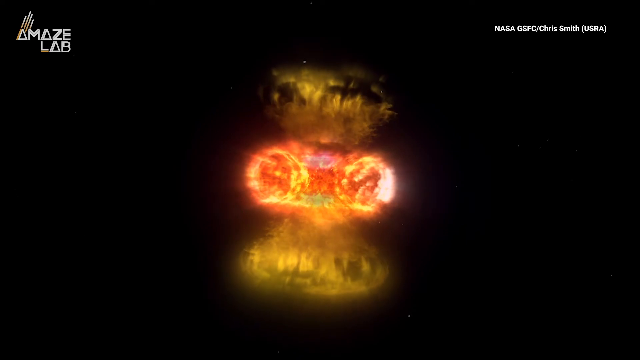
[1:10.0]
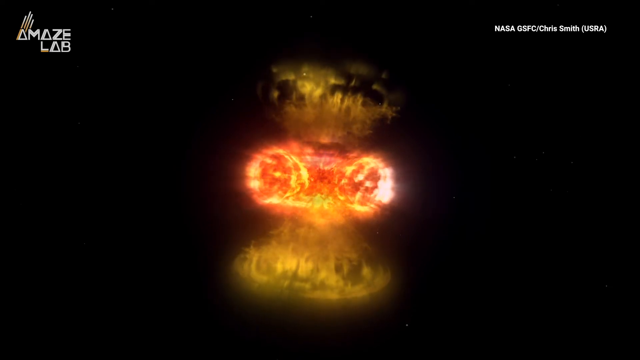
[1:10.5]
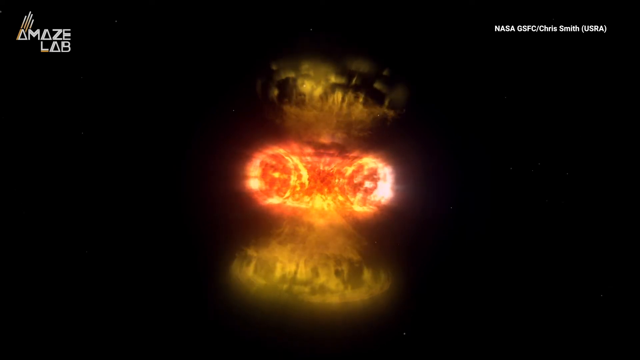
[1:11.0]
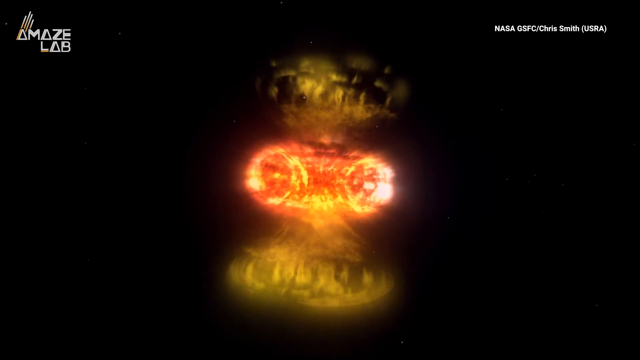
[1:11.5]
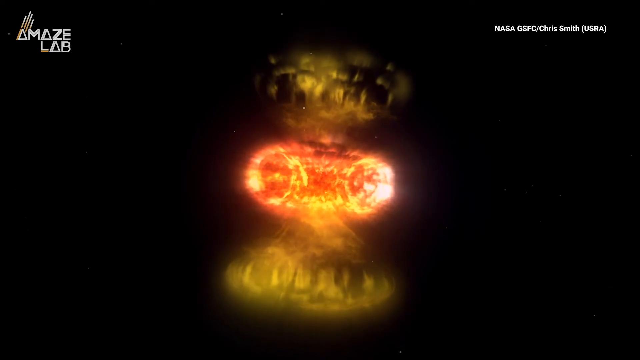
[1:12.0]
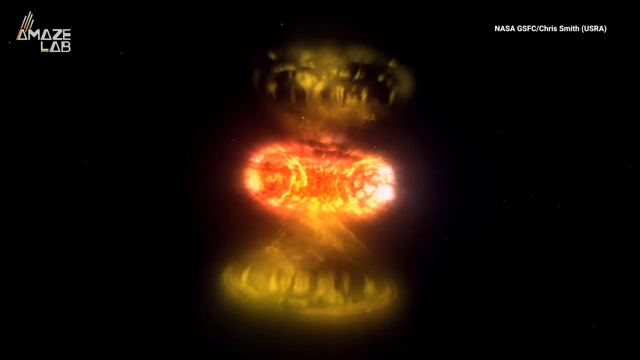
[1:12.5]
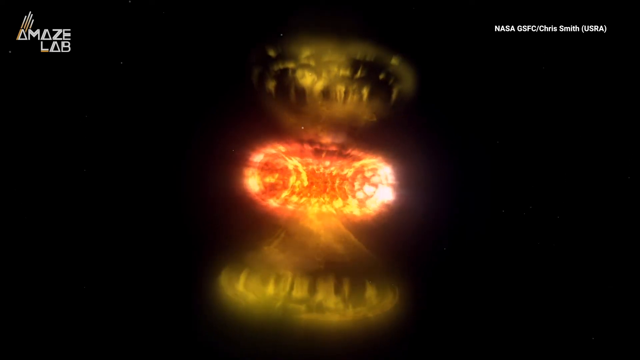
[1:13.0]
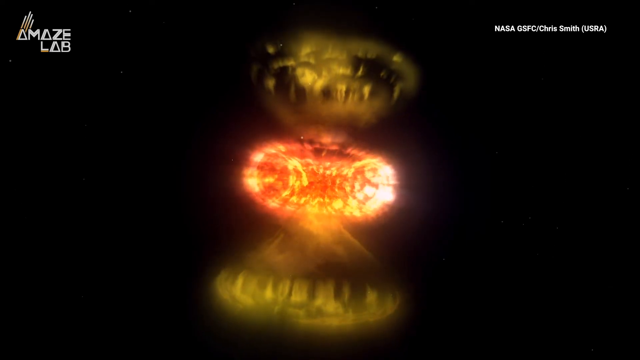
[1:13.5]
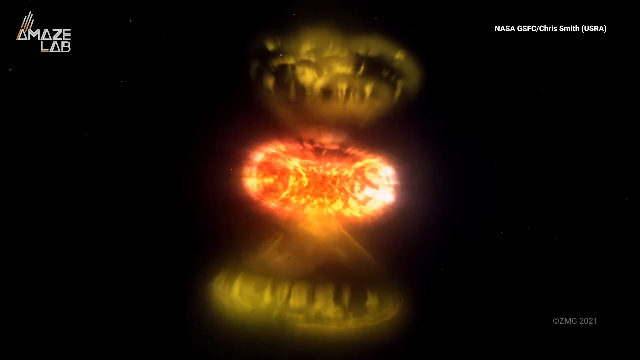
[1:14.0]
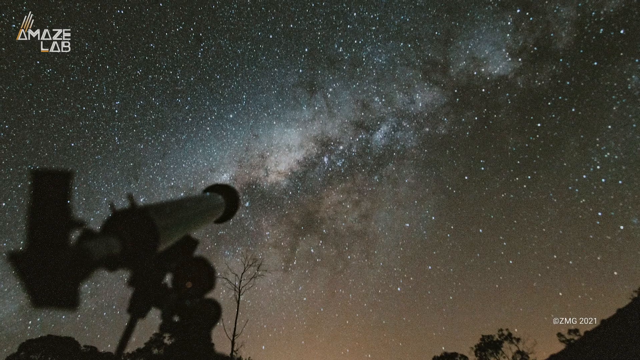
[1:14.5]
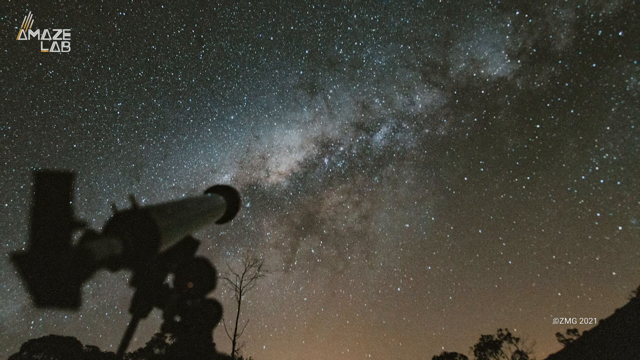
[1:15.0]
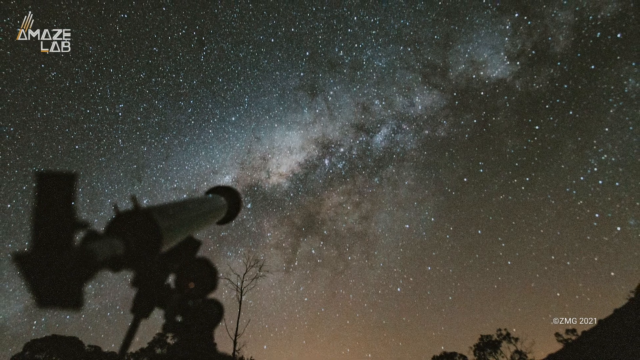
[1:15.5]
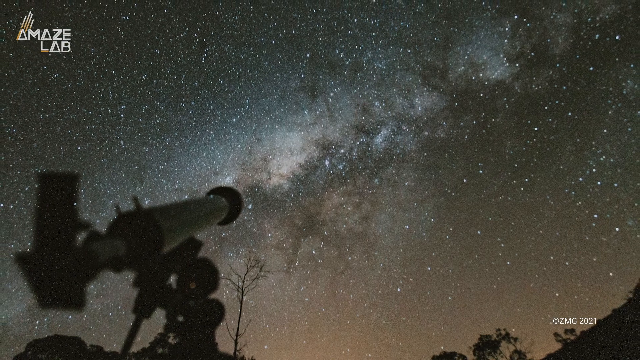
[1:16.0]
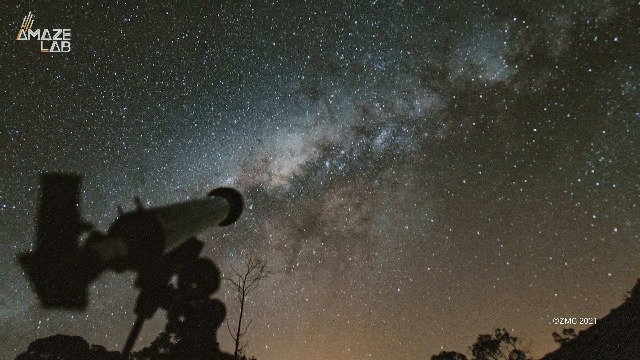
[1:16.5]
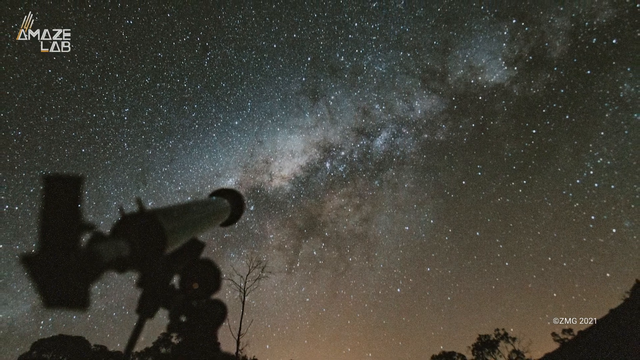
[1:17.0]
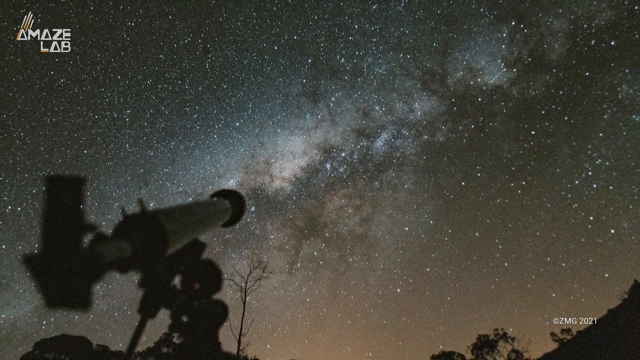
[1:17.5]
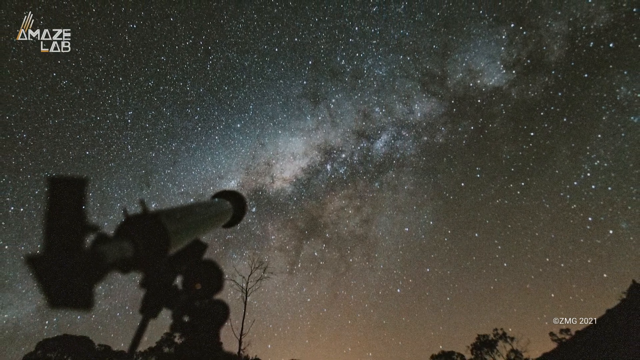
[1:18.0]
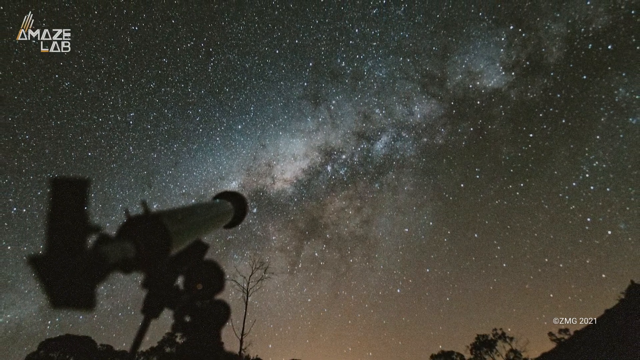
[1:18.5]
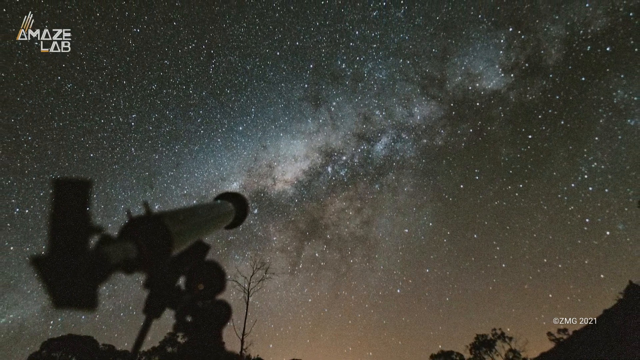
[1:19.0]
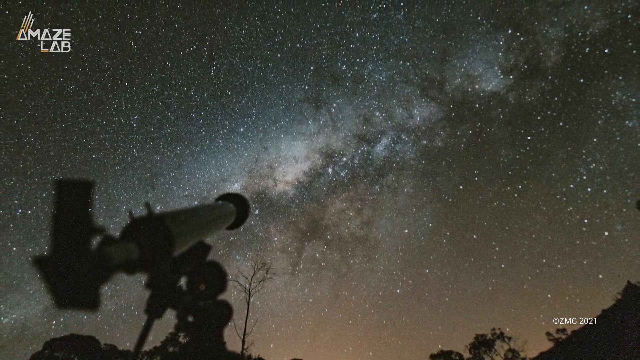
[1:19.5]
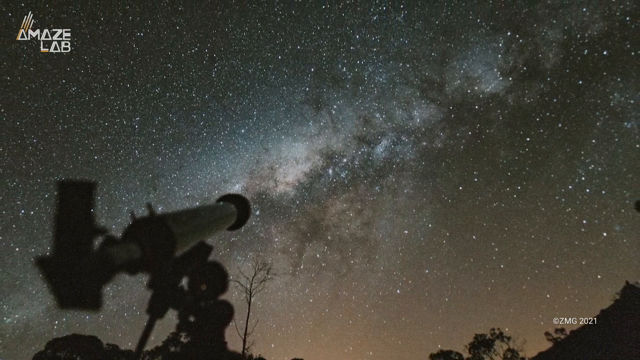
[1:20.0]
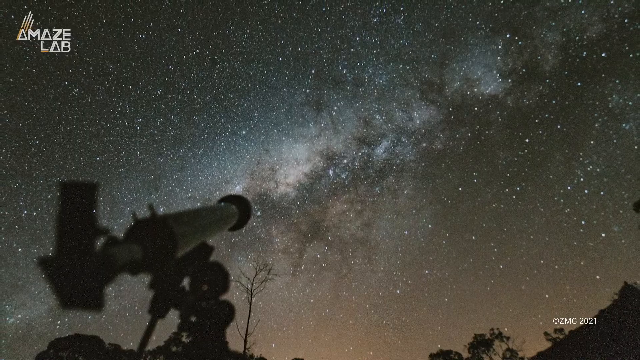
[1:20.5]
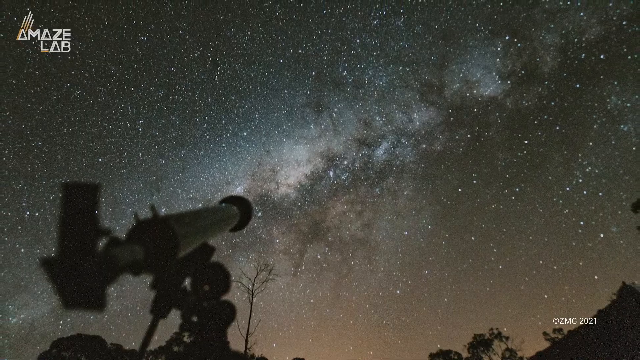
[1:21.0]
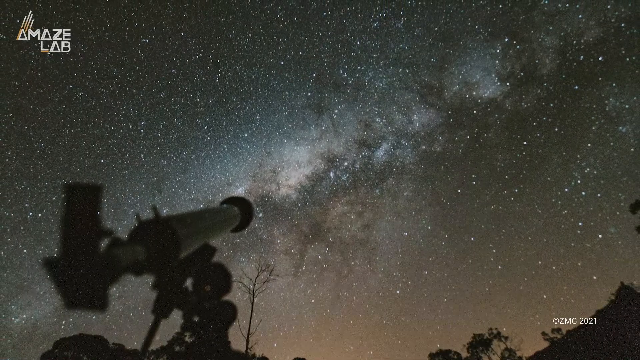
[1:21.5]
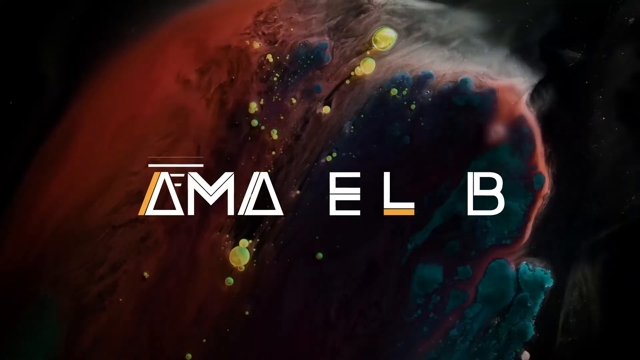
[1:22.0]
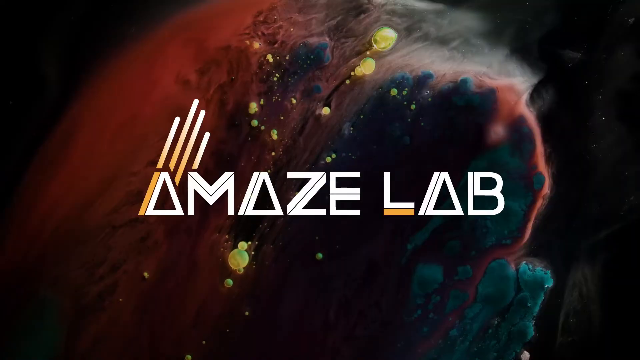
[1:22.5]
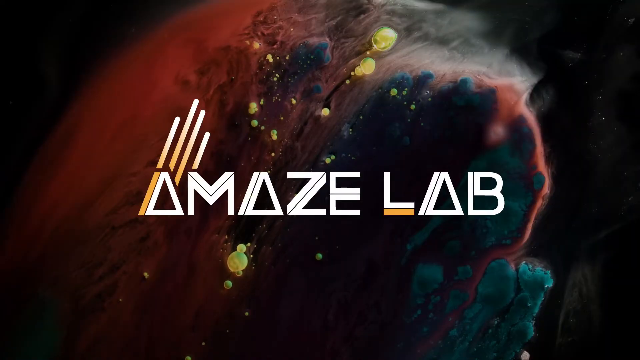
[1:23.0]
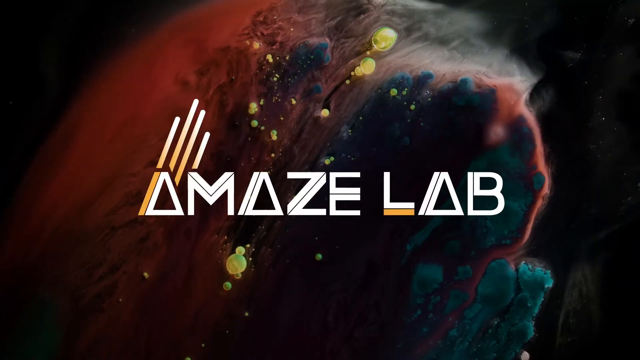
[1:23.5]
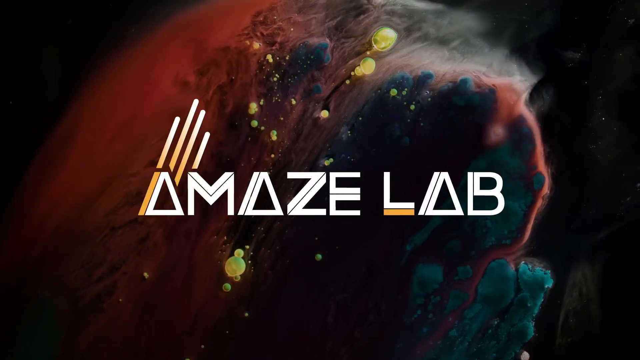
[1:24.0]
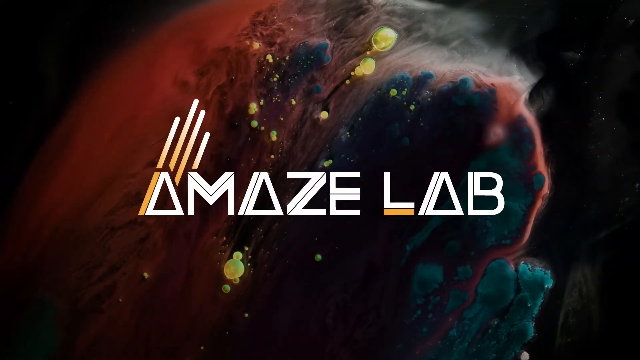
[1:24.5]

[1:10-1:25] A slow-motion explosion in space, apparently a nova, shows almost a mushroom cloud from the top and the bottom with a huge fiery ball in the centre. A logo for the site, called Amaze Lab, is in the top left corner. As the fireball progresses, it transitions to a still image of a telescope down on earth looking up towards a pattern in the sky, and the view slowly pans out, revealing a tree in the distance. It then changes to a colourful image of a space scene, with the name Amaze Lab superimposed across it in quite a futuristic logo, apparently the name of the company that produced the video.